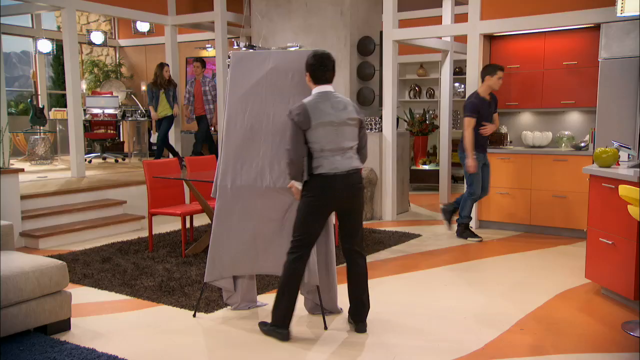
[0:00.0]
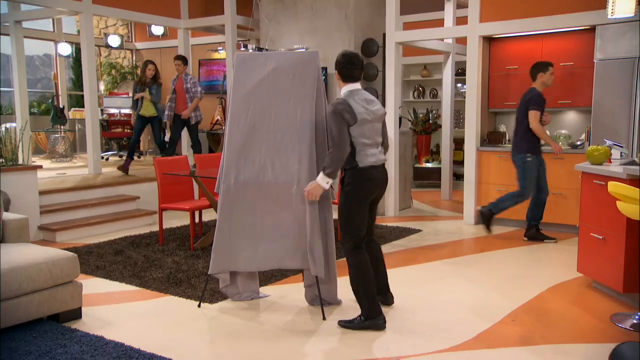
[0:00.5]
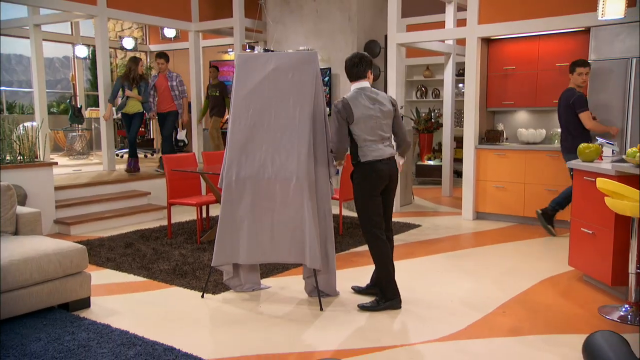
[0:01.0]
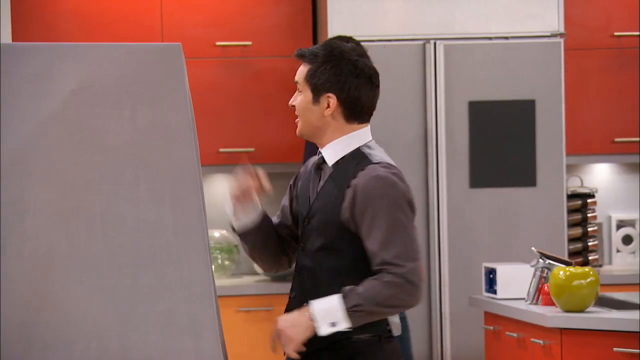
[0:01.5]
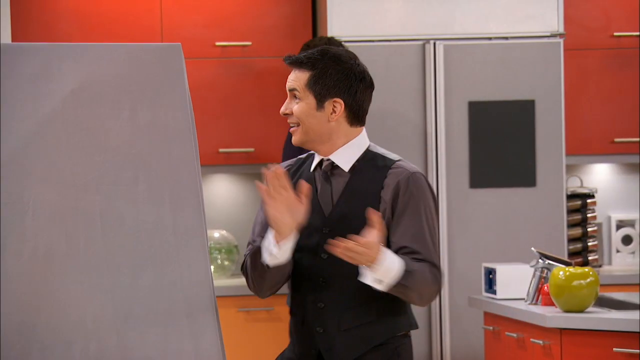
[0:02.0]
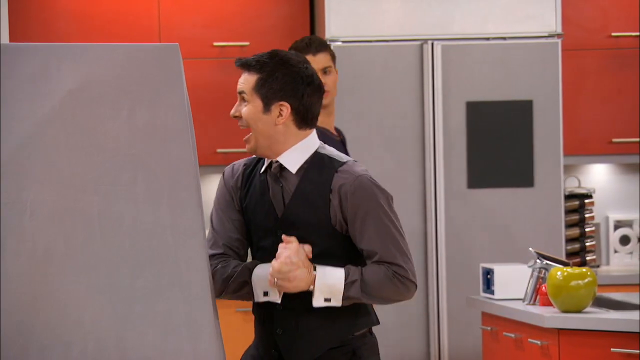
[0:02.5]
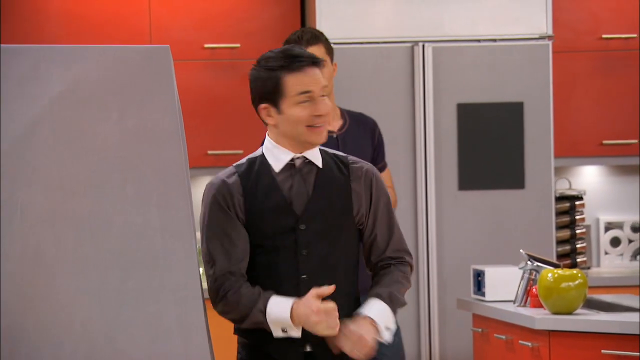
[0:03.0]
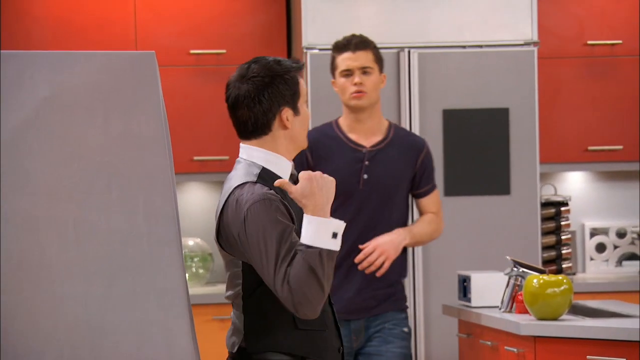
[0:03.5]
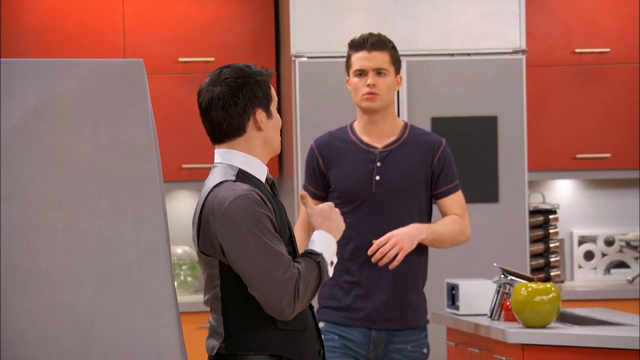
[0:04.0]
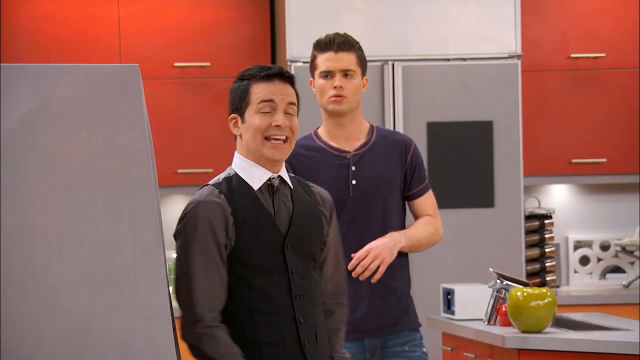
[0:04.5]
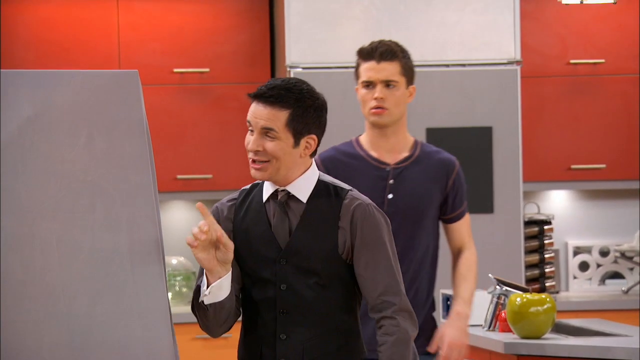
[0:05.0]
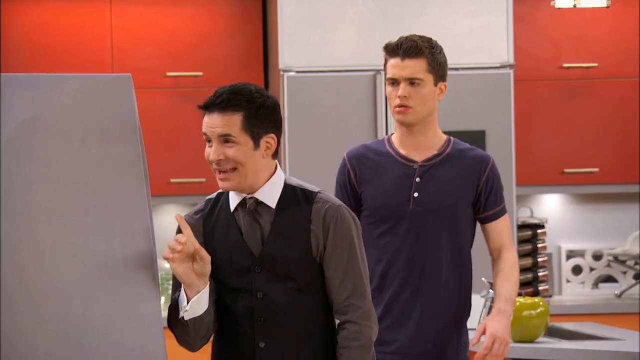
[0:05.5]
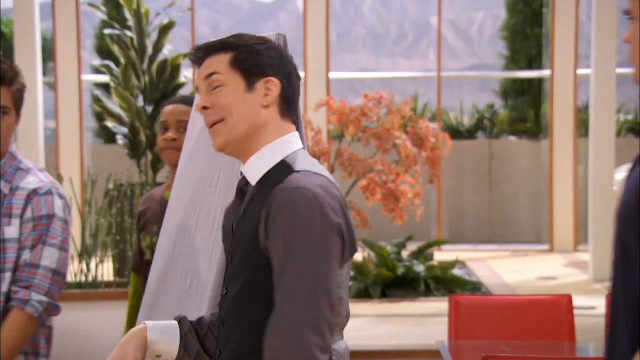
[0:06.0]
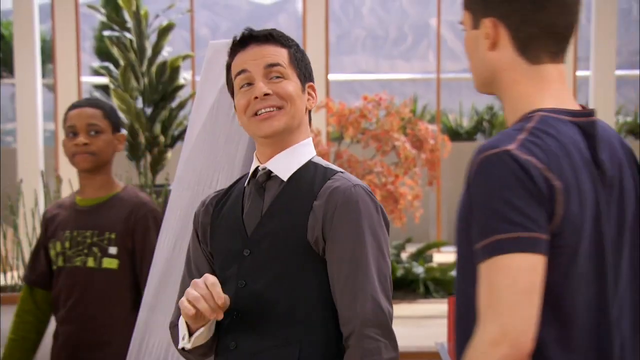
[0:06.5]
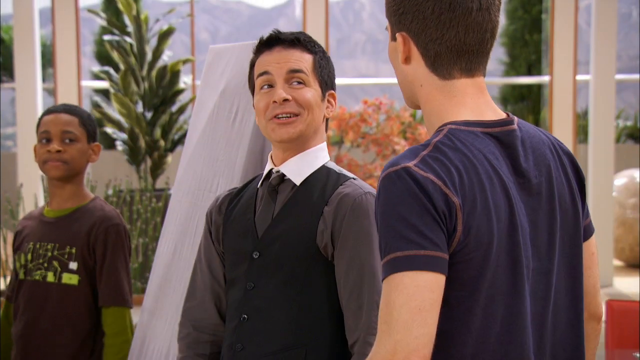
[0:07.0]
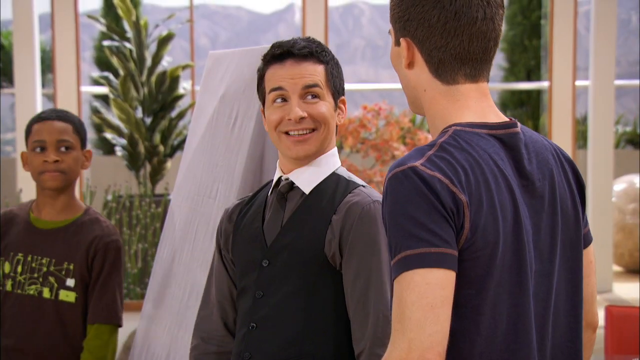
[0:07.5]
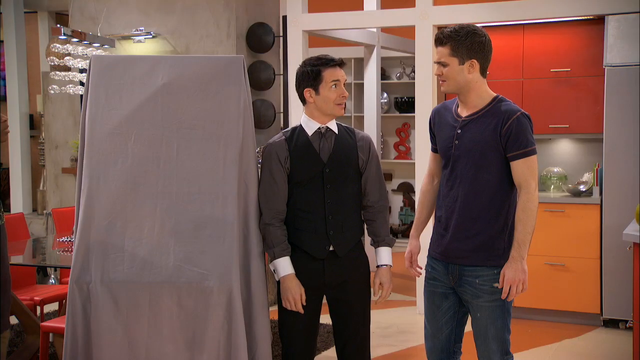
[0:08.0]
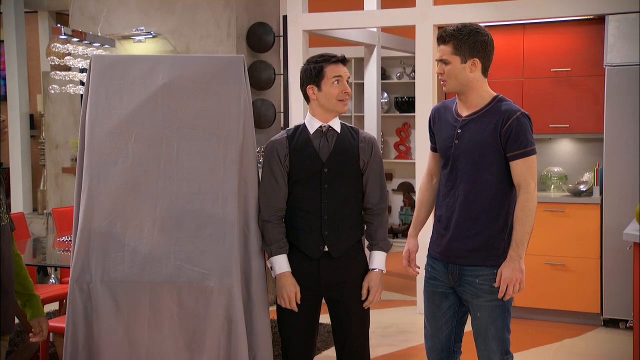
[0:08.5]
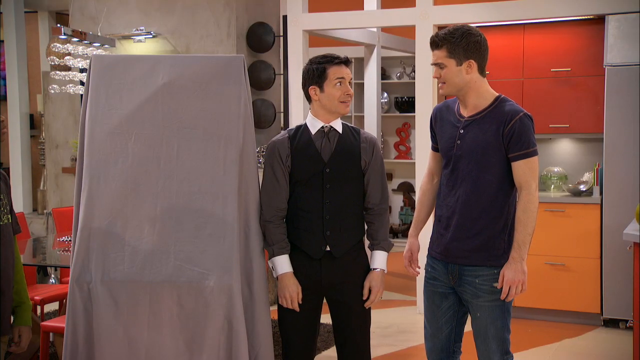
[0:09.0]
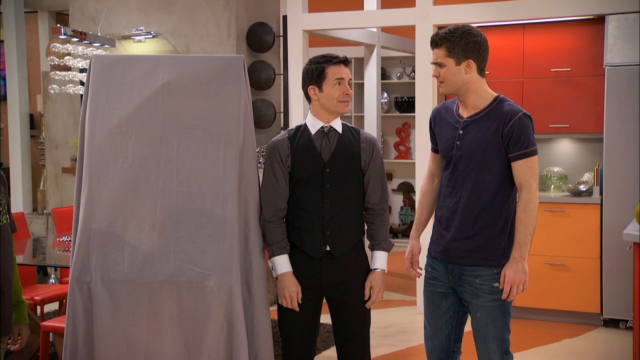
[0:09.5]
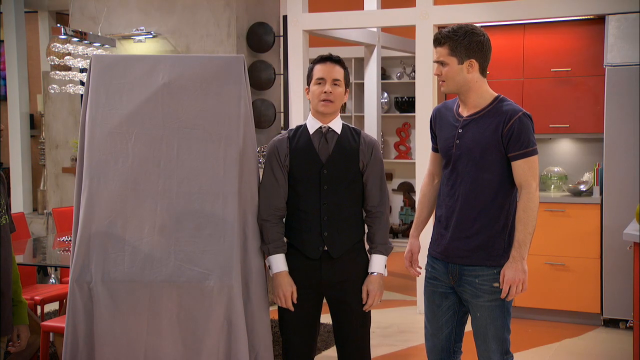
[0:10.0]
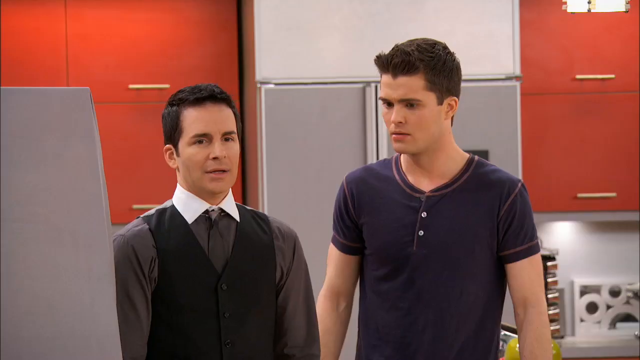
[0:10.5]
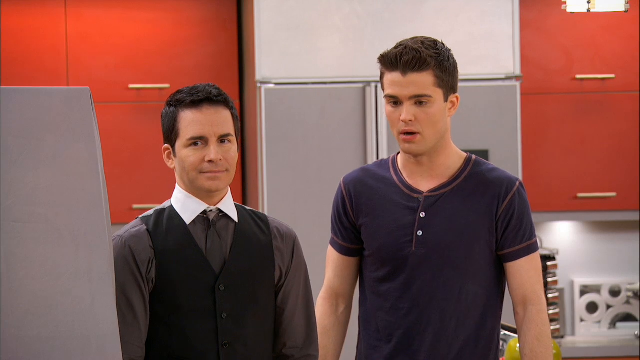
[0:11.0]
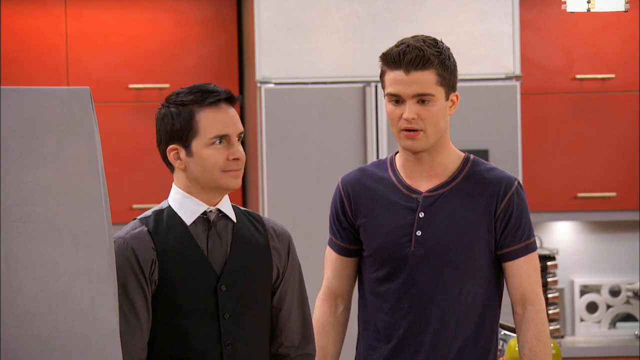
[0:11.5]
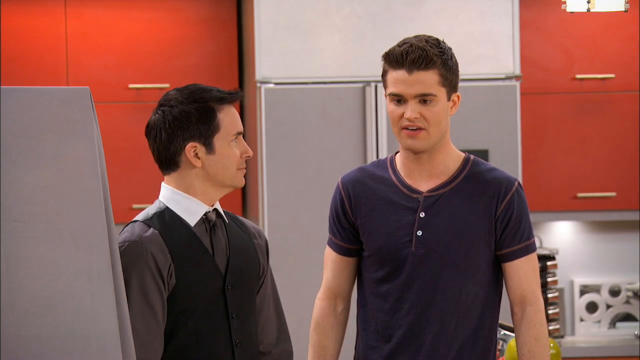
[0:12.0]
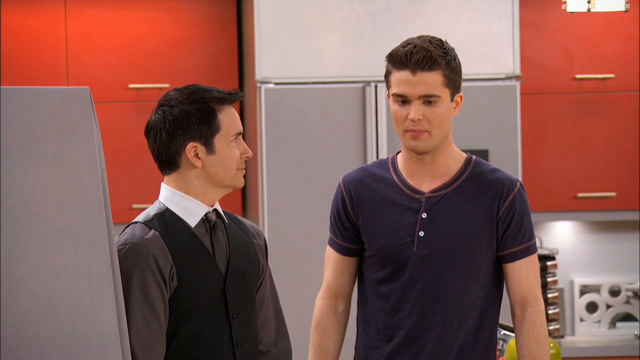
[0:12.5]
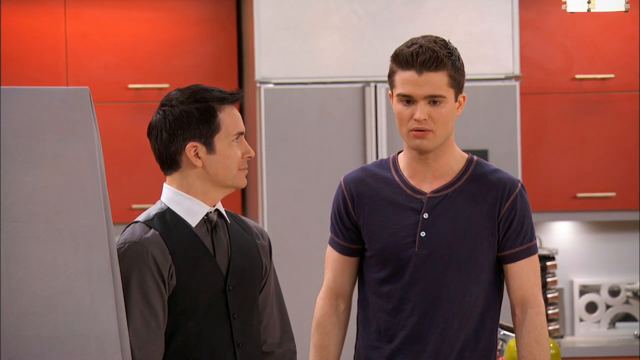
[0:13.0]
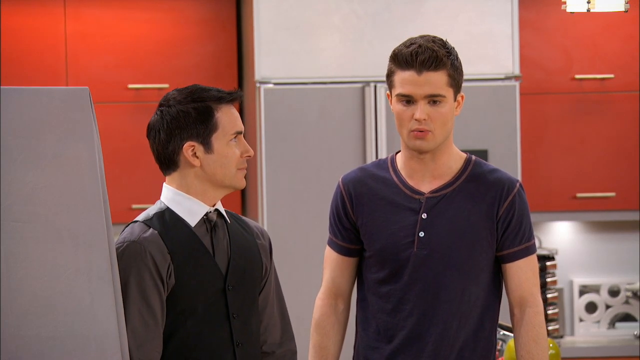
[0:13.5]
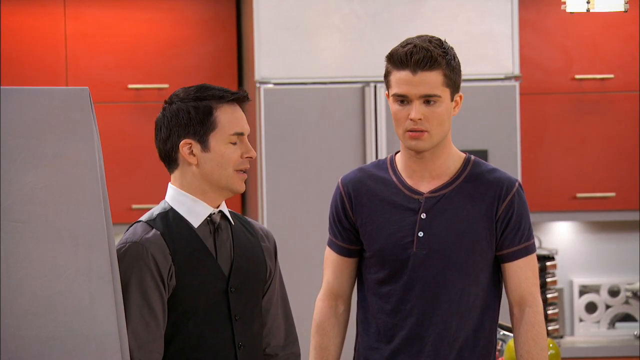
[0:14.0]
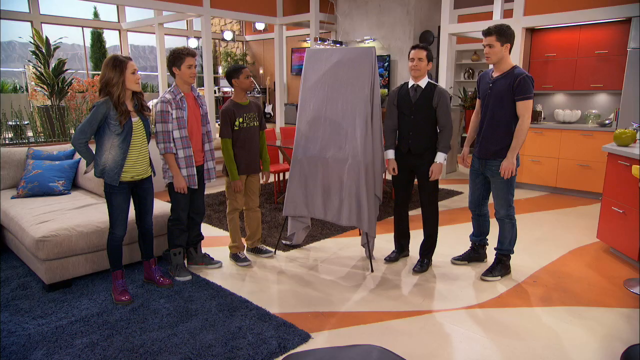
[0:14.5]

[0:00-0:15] The video opens on what looks like a television set: a large room meant to look like an apartment, with many cabinets in bright orange and red. The floor is cream-colored with orange swirls. The camera pulls out to show a man in a black dress shirt and vest, with another young man standing next to him. Three teenagers, two boys and a girl, walk into the room from off screen, pass a glass dining table, and stand in front of the man, in front of a sectional couch with another glass coffee table in front of it. Behind them is a wall of windows and a staircase that goes up to a second floor off screen. The man is standing next to an easel covered with a gray cloth. He talks to both groups of people, on the left and on the right, then stands and listens to the man to his right speak; that man had been walking toward the refrigerator when the first man asked him to join him at the center of the room. Behind the young man is what appears to be a kitchen with counter space, the refrigerator, and other items.